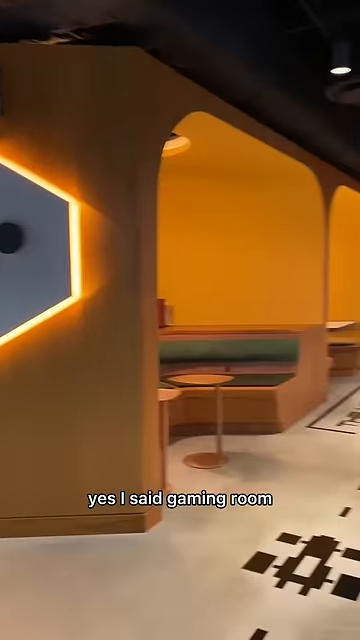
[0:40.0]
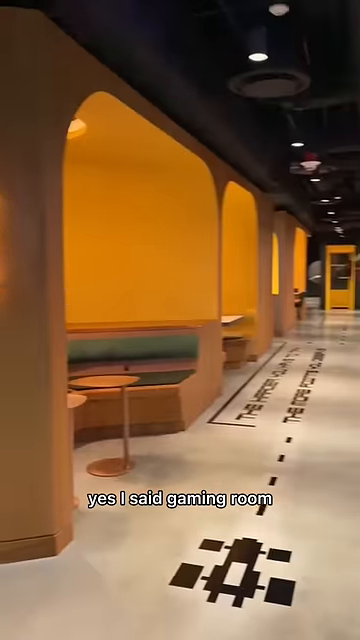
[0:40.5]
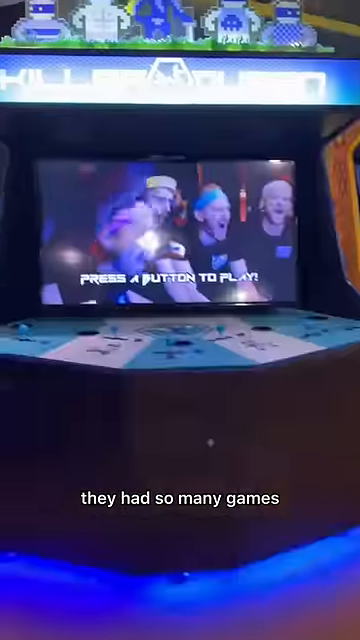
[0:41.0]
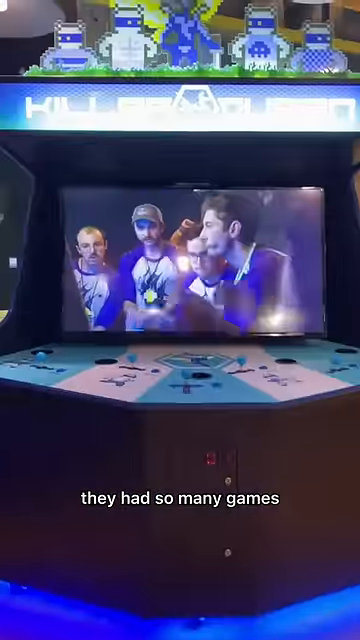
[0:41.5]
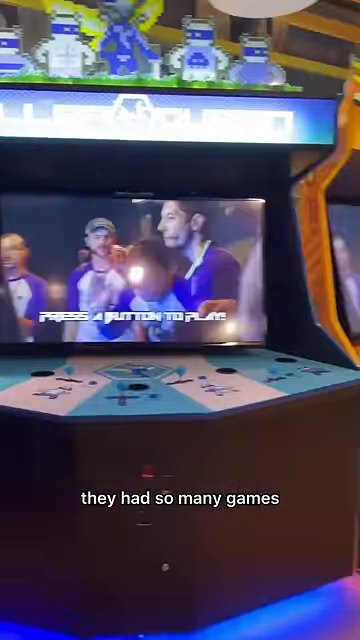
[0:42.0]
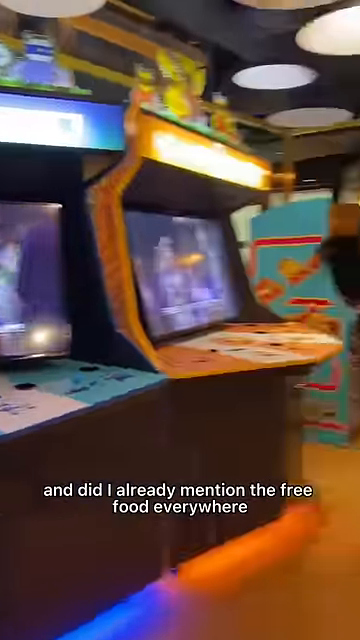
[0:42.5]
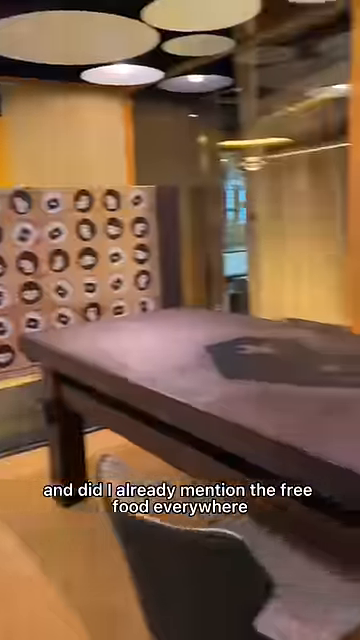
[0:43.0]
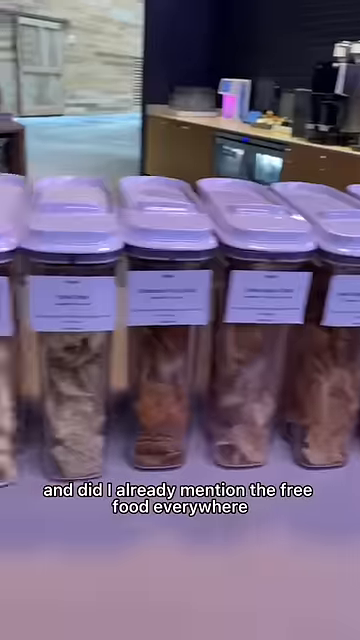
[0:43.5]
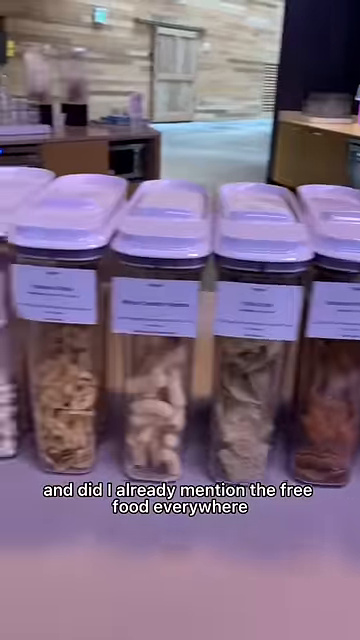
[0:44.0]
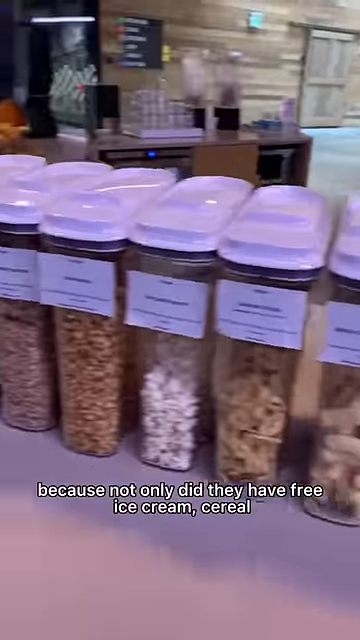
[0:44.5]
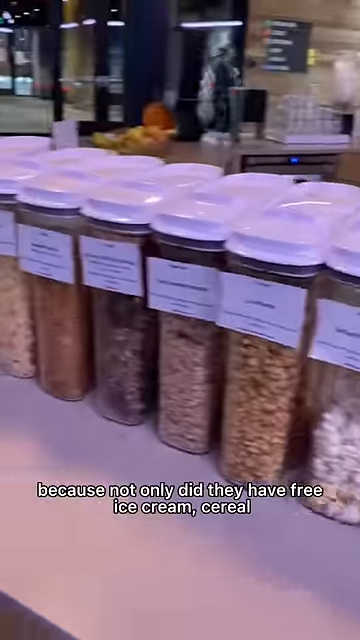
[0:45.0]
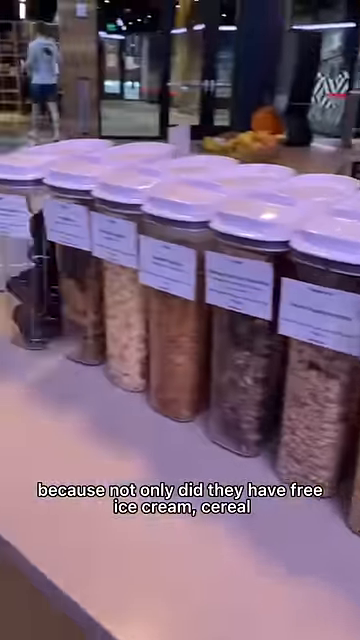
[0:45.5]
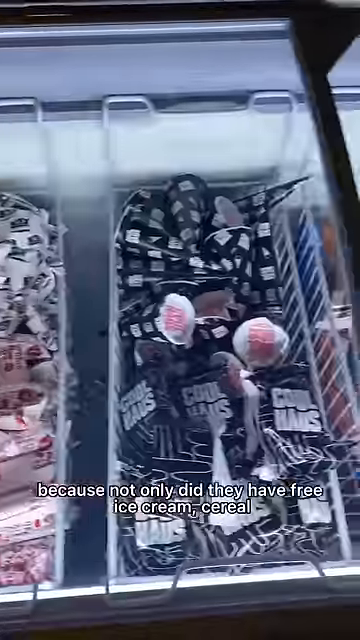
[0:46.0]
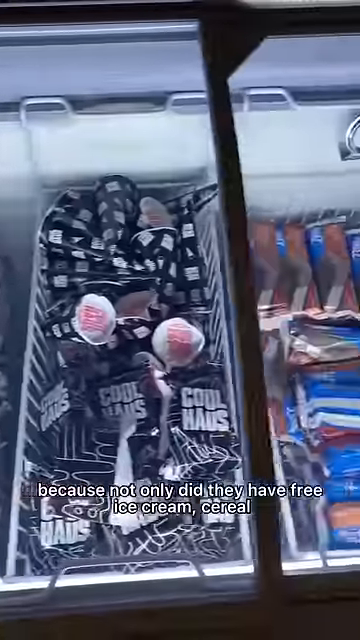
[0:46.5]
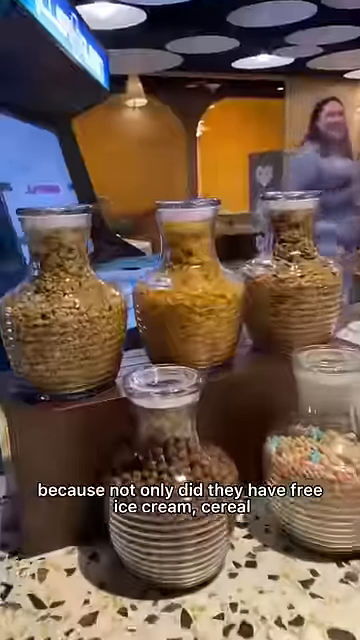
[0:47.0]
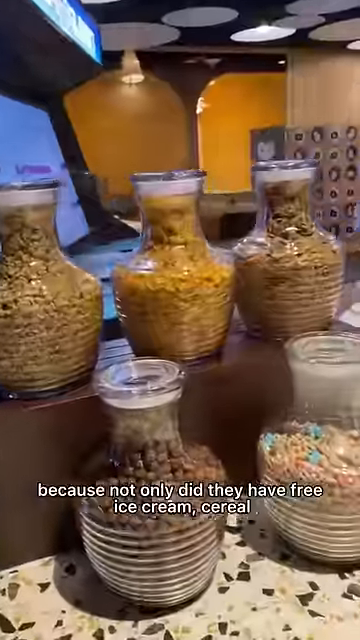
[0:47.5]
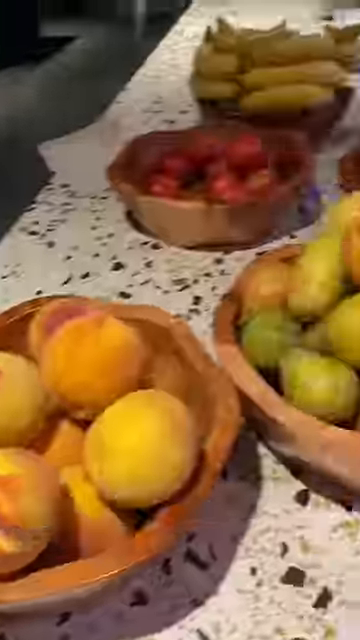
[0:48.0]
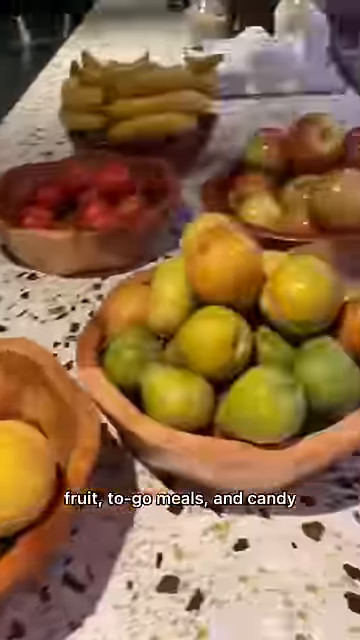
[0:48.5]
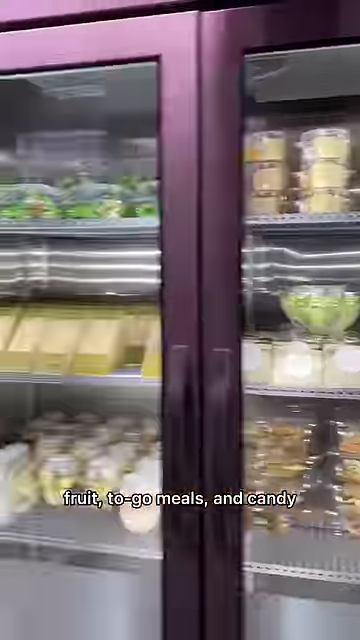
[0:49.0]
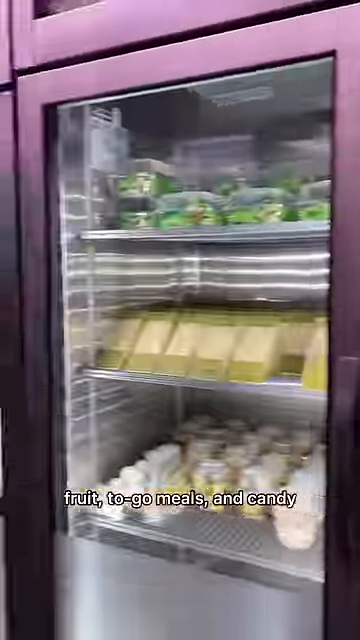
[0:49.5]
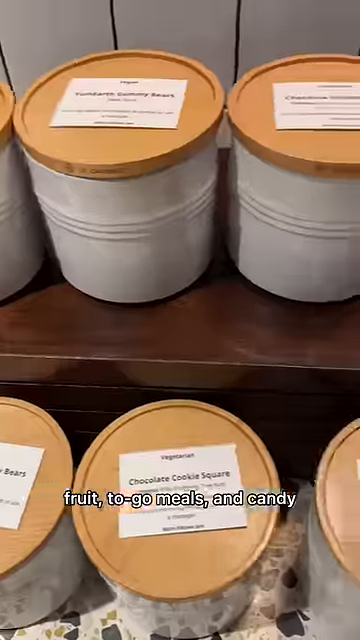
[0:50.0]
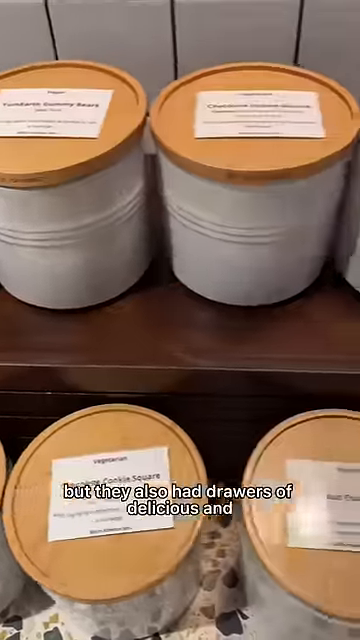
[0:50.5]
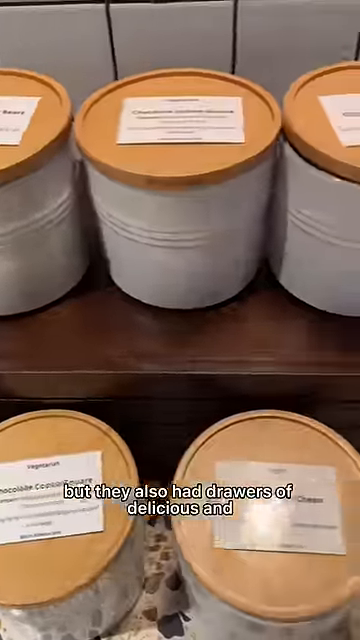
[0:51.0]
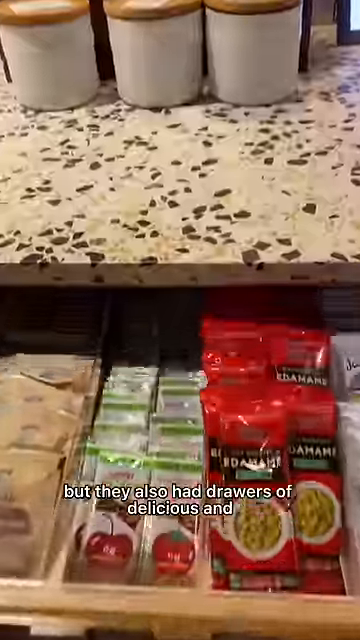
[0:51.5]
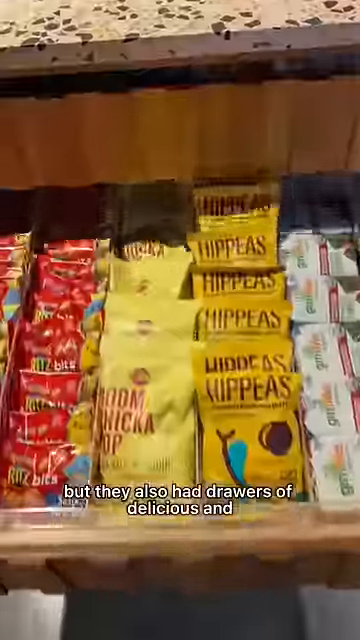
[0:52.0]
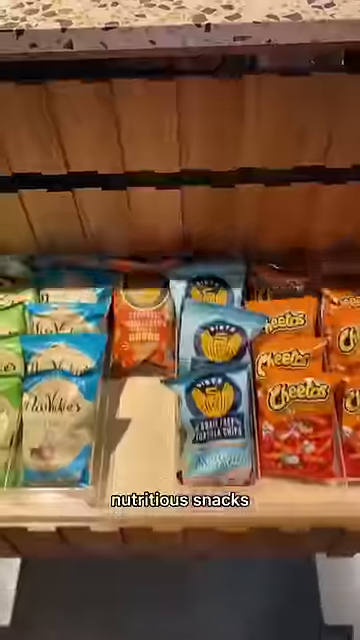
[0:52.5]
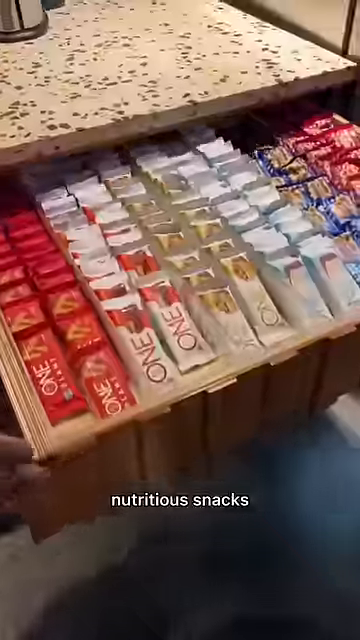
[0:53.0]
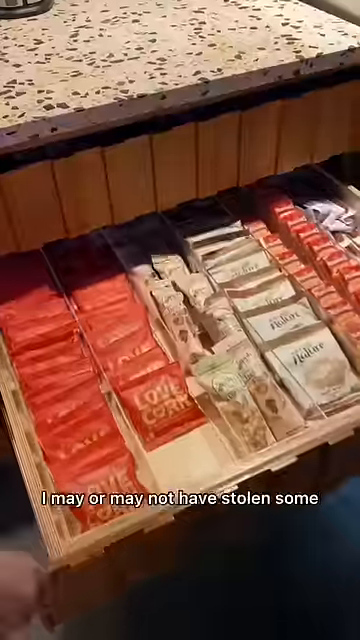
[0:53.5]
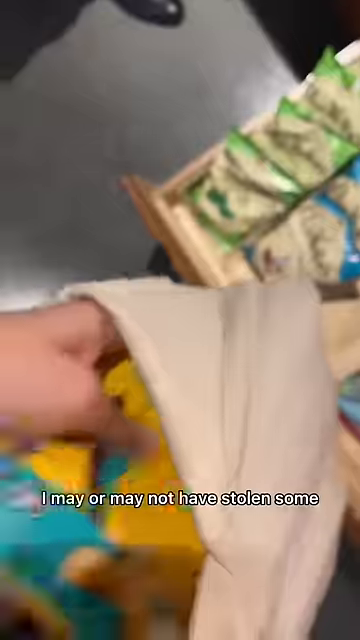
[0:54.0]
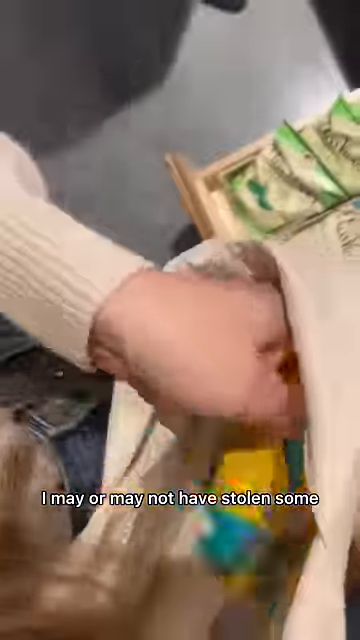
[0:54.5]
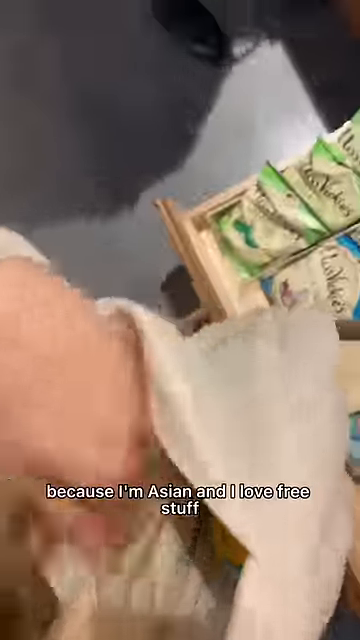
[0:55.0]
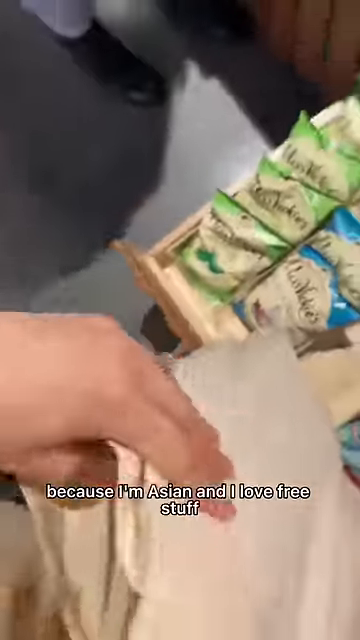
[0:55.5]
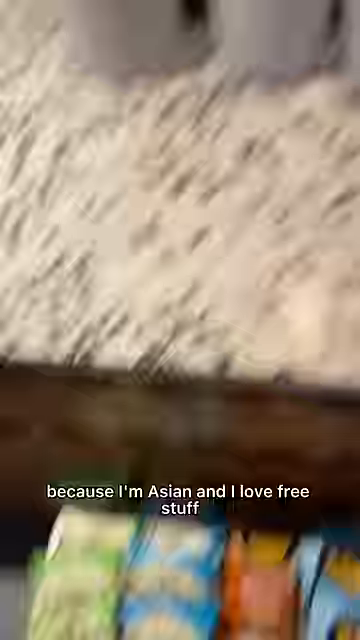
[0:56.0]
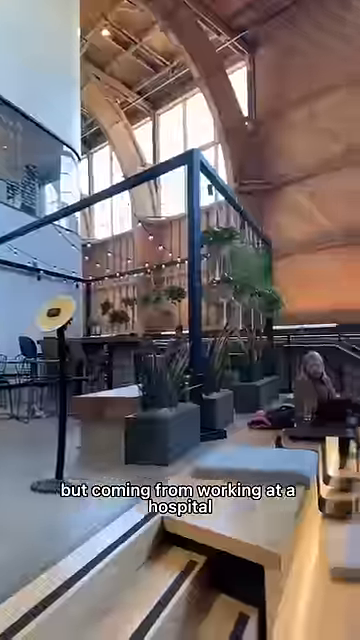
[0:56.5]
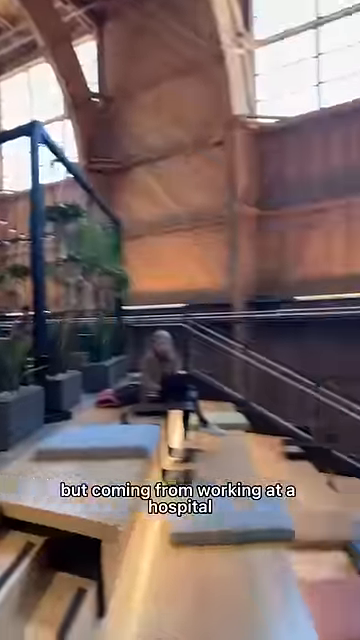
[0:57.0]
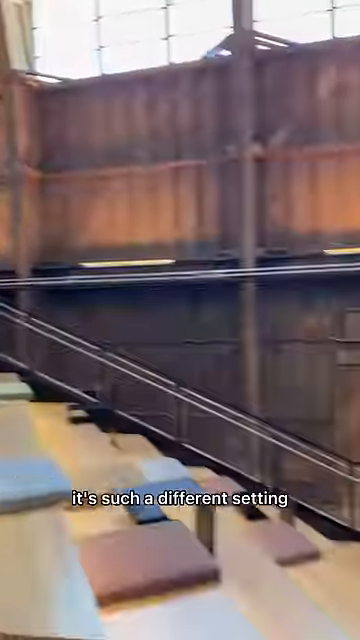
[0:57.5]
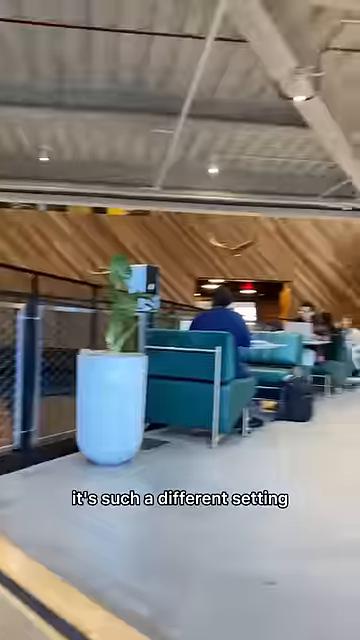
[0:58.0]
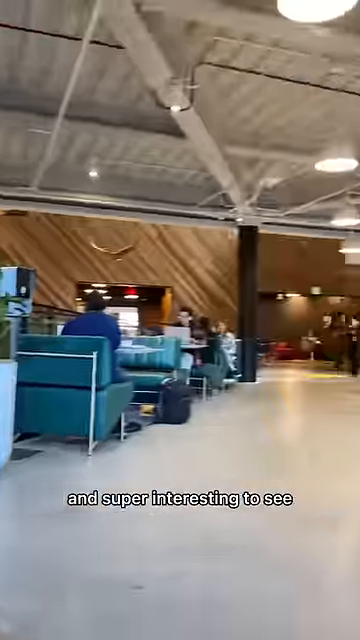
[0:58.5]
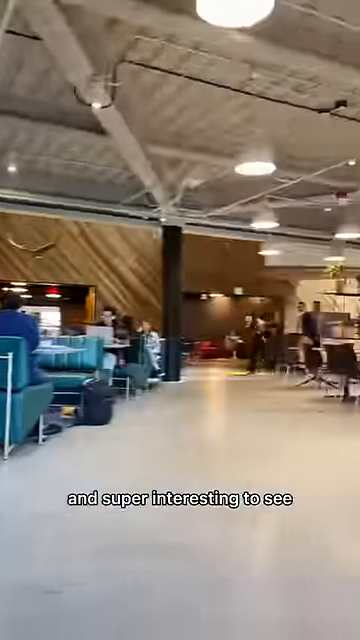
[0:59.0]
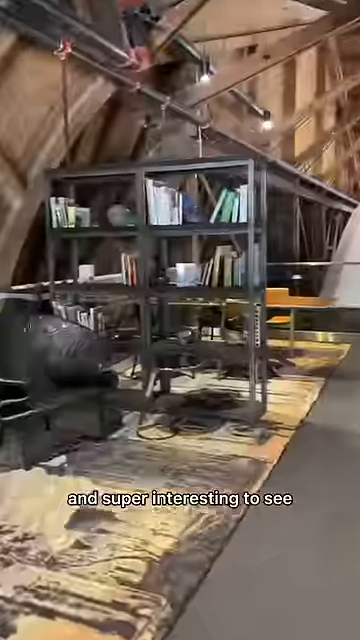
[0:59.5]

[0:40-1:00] The gaming room, which has different games, is shown. The shots go by very quickly, each lasting only a few seconds, making it hard to see exactly what is in each one. Subtitles over the video show what the woman is saying, including that there is free food everywhere and that there is free ice cream and cereal. Many shots show the different food available and drawers full of different snacks. In one shot she takes some of the snacks and puts them in her purse. Bowls of fruit, granola bars, chips, and many different canisters of food are shown. She also shows a room with tables, chairs, and many shelves.